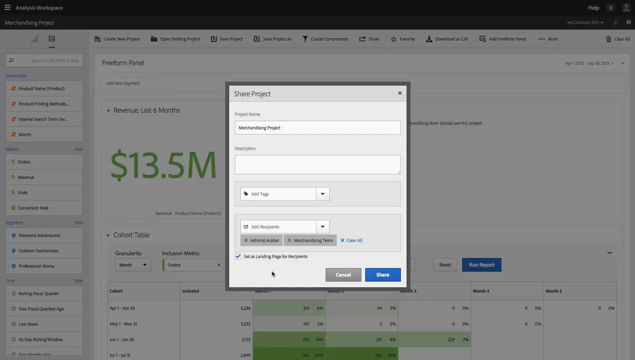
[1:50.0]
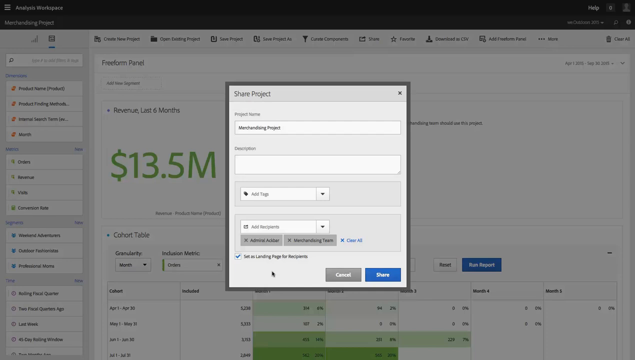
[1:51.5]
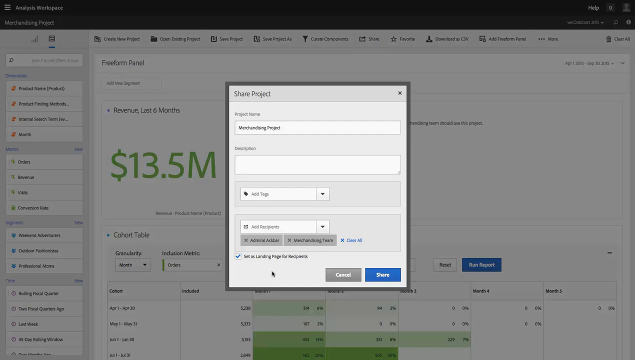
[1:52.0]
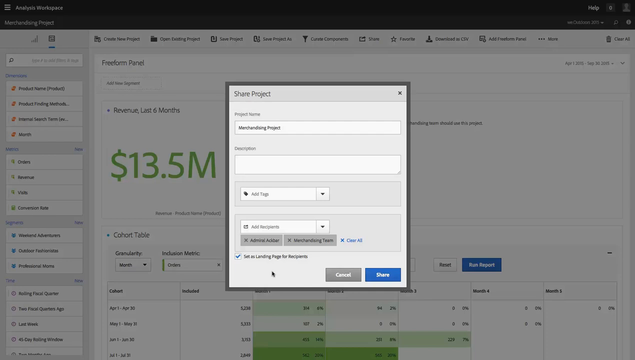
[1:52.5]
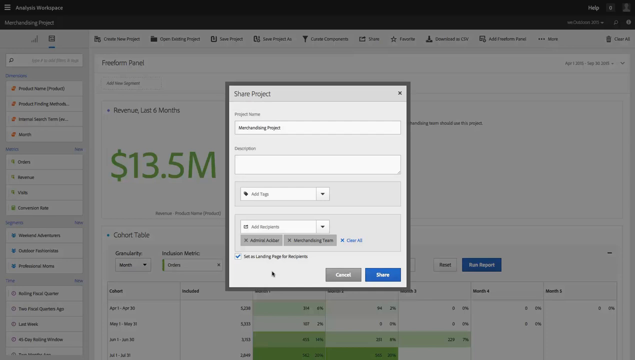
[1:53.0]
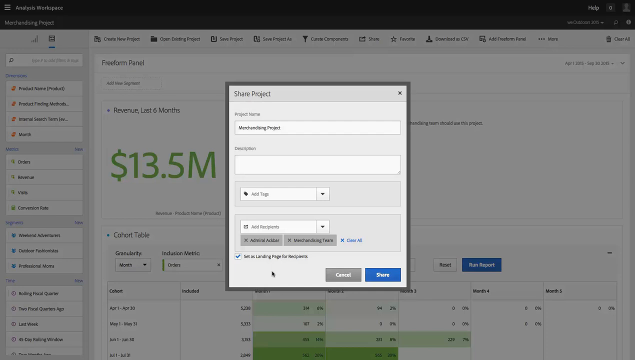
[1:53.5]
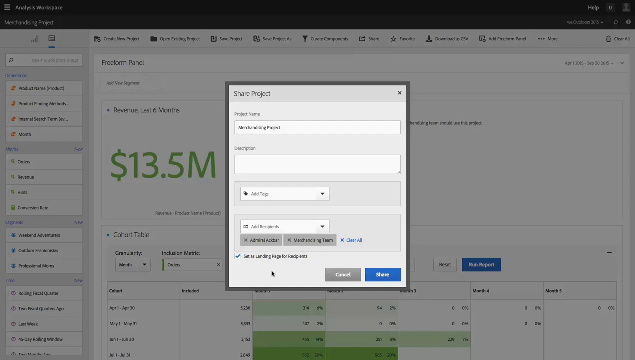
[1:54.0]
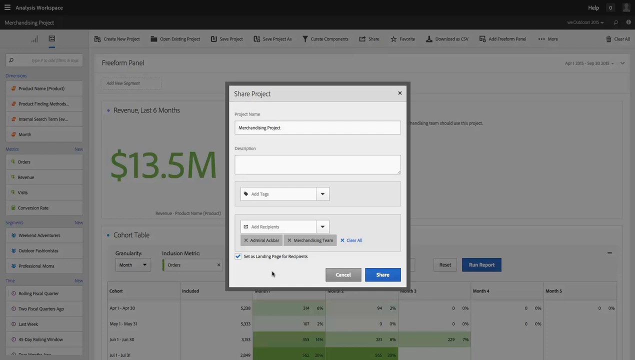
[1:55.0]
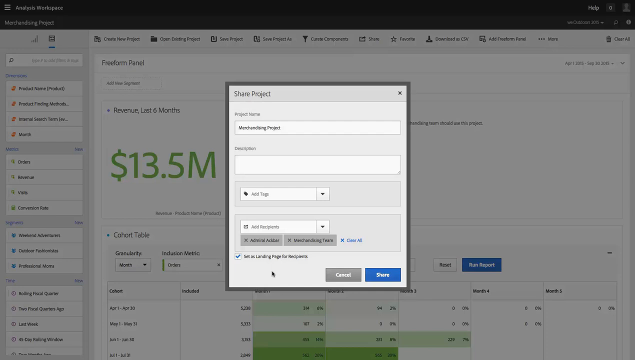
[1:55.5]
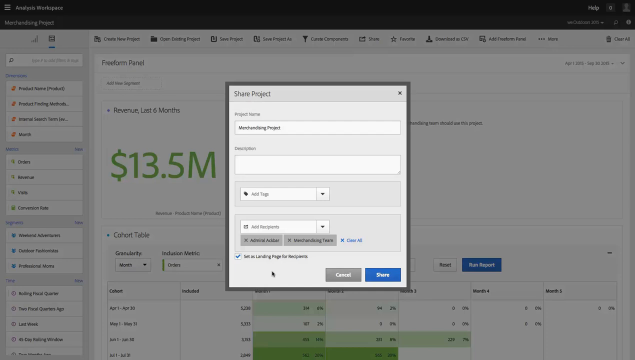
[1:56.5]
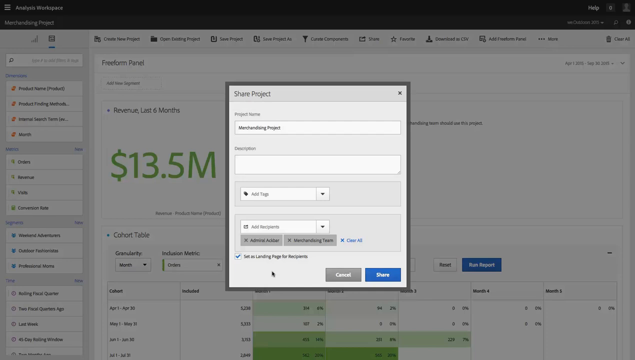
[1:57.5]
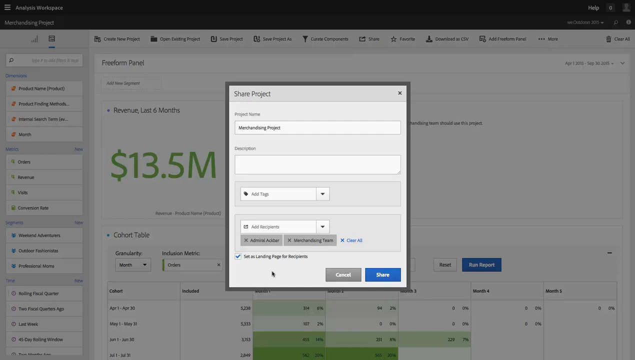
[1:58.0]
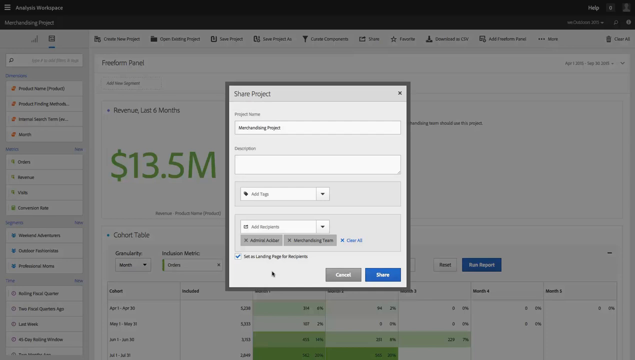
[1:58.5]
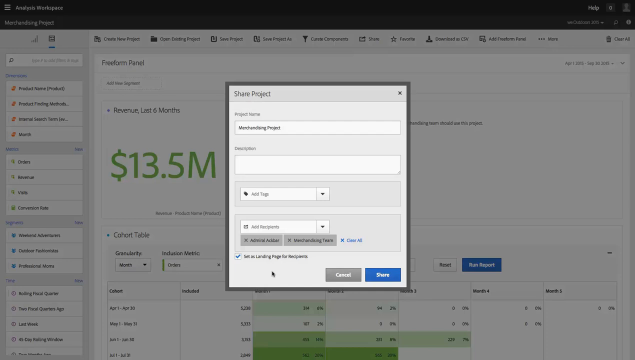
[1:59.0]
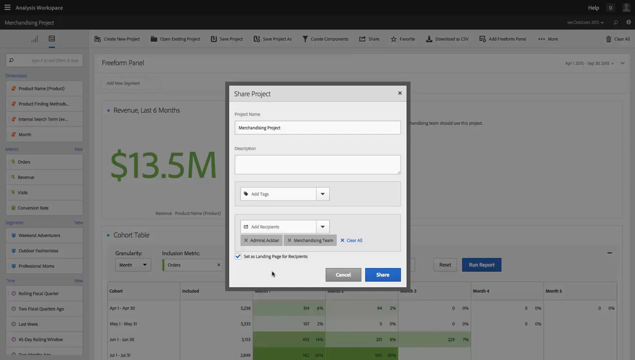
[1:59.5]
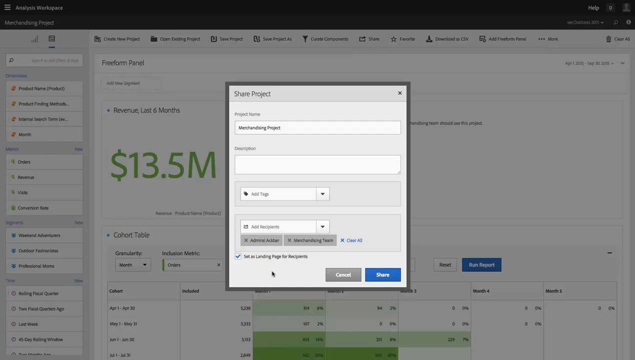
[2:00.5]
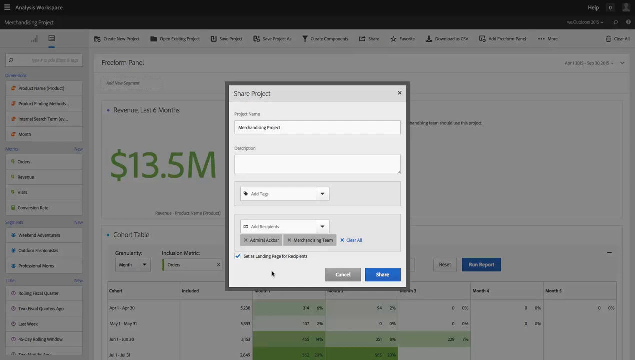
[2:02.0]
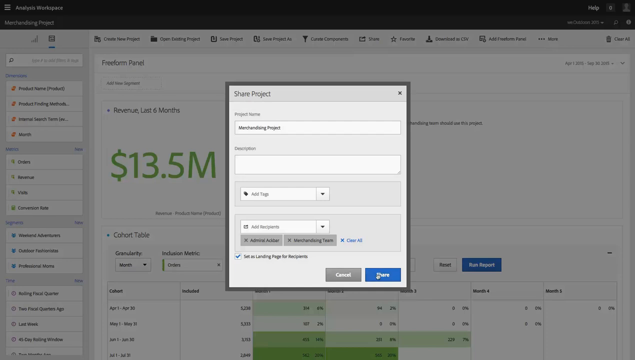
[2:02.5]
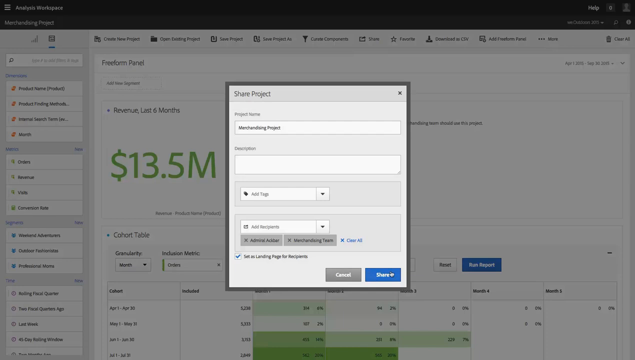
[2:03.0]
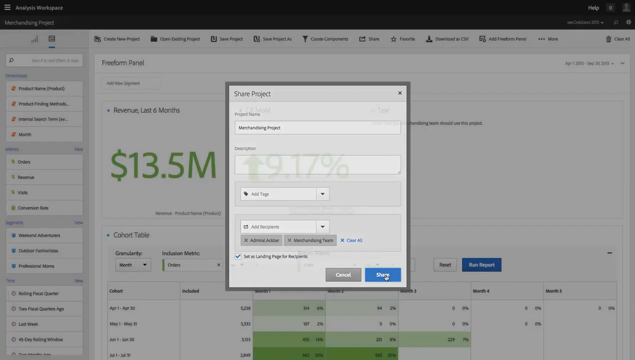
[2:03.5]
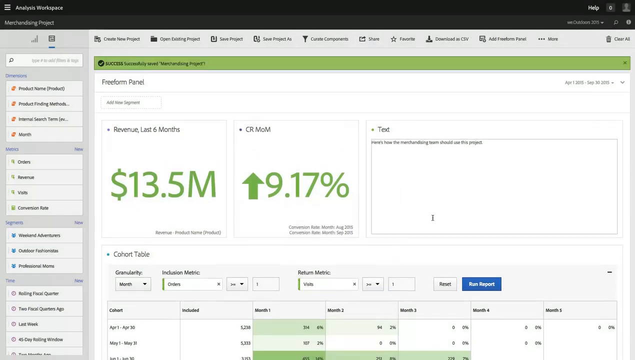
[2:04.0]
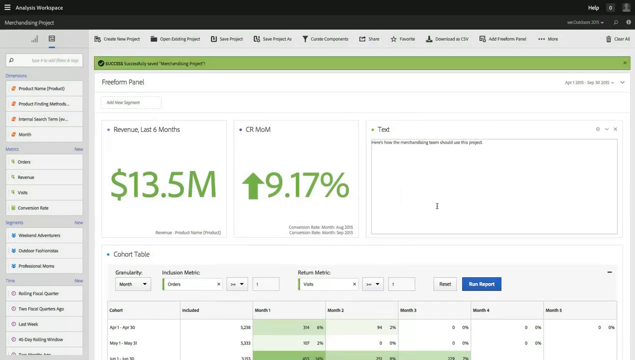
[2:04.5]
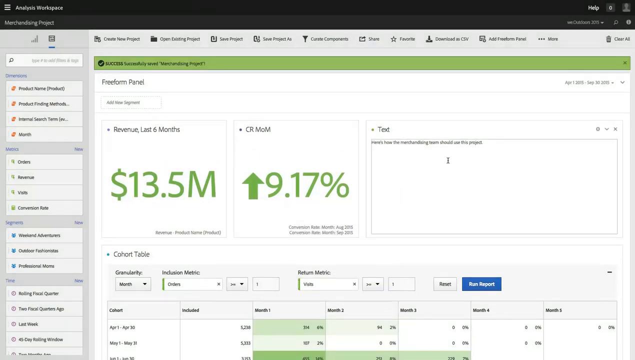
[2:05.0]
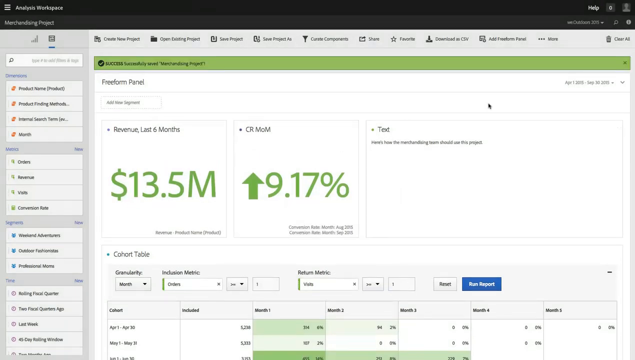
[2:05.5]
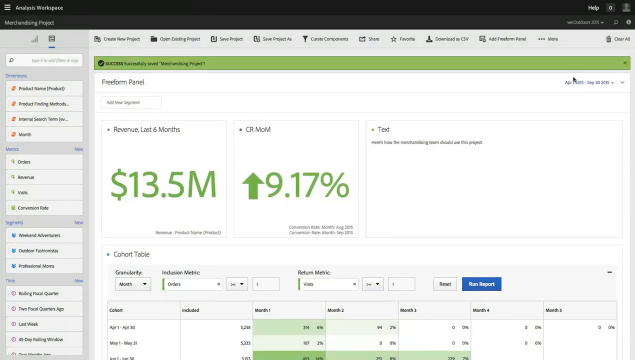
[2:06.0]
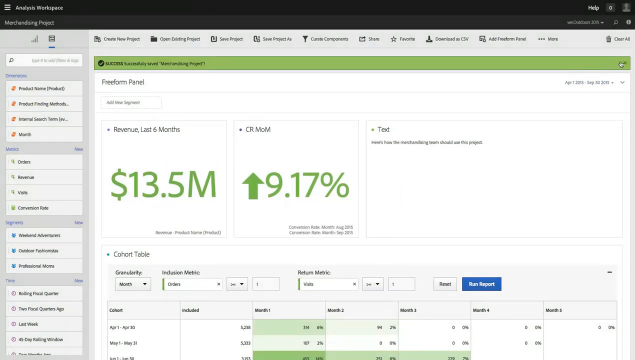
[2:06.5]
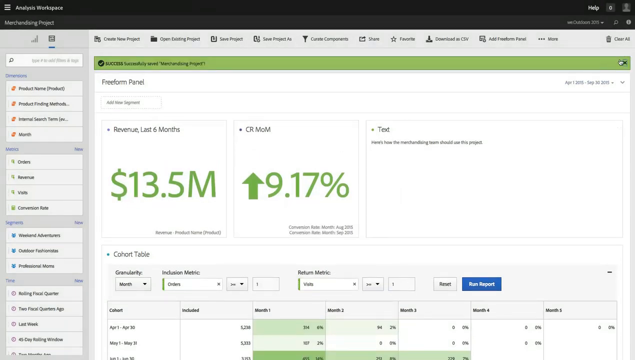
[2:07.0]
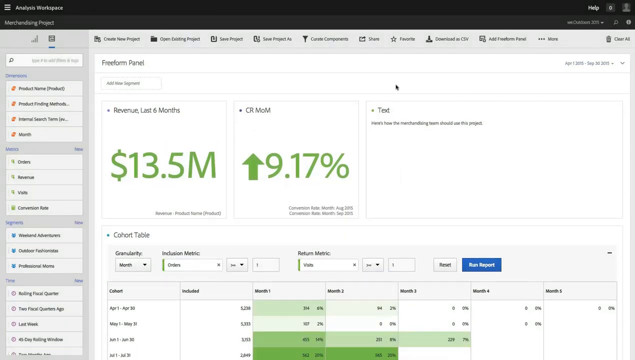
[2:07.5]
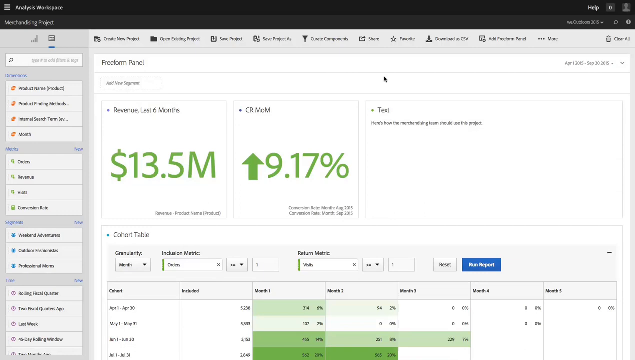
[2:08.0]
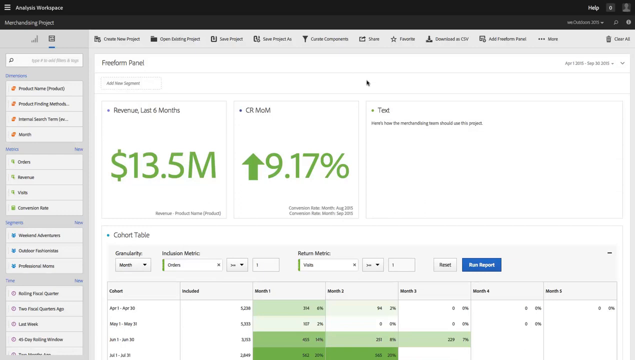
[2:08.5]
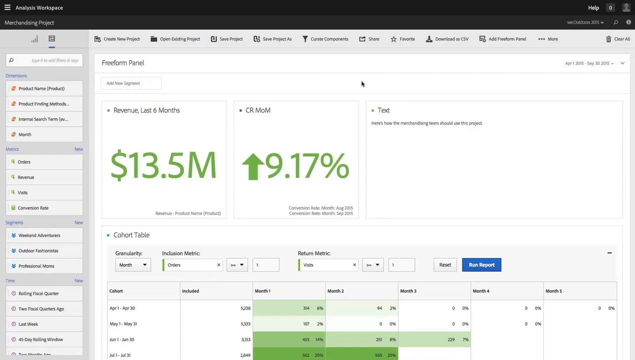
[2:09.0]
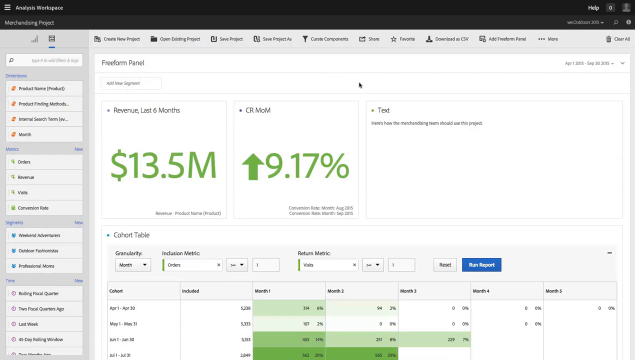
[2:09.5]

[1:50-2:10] The Share Project window is in the center of the screen, with the rest of the application grayed out behind it. The mouse pointer continues to sit near the bottom-left area of the window. After a few moments it darts to the lower-right corner of the window and clicks a blue button labeled "Share." The window fades away and the application screen becomes fully bright again. The cursor then moves progressively up toward the top right and clicks an X to close a thin green banner that says "SUCCESS Successfully saved "Merchandising Project."", and the banner immediately disappears. The cursor is then placed in the top quarter of the screen, almost in the center, resting above the "CR MoM" and "Text" headings.